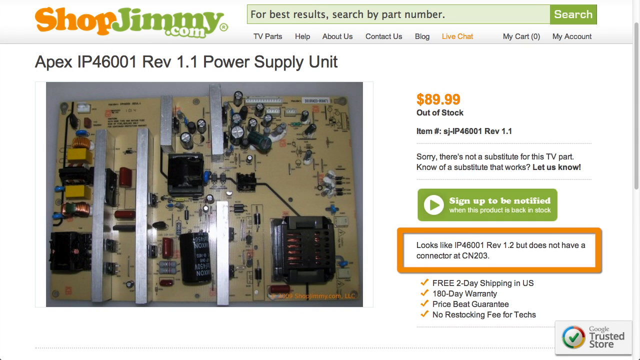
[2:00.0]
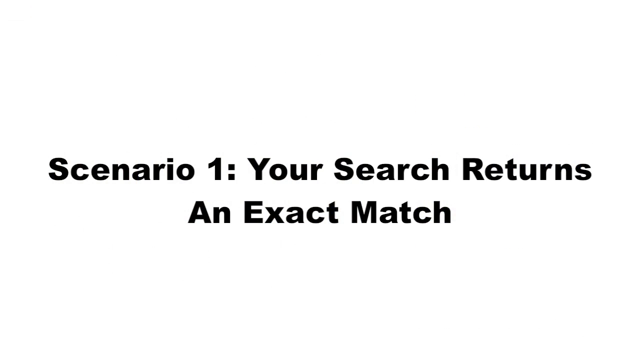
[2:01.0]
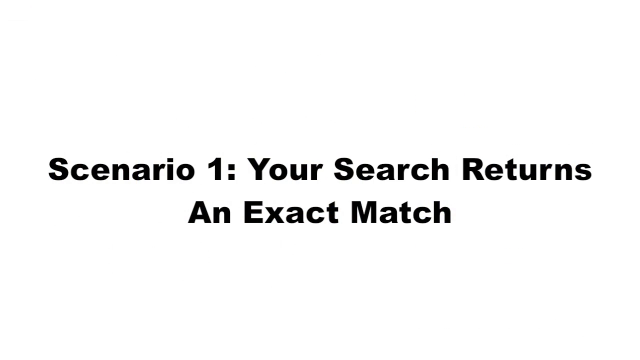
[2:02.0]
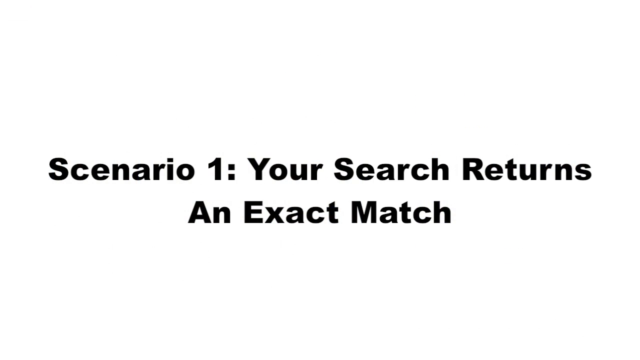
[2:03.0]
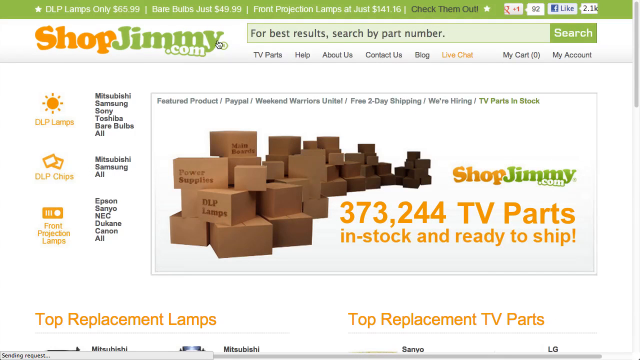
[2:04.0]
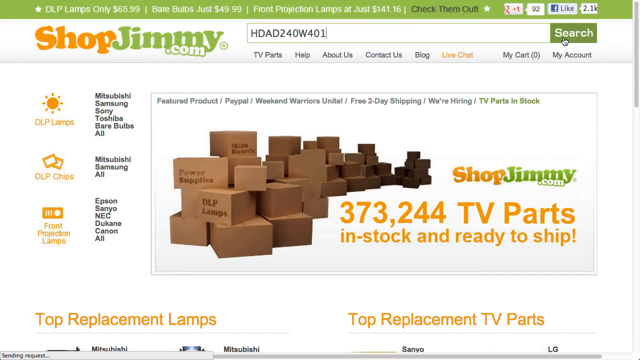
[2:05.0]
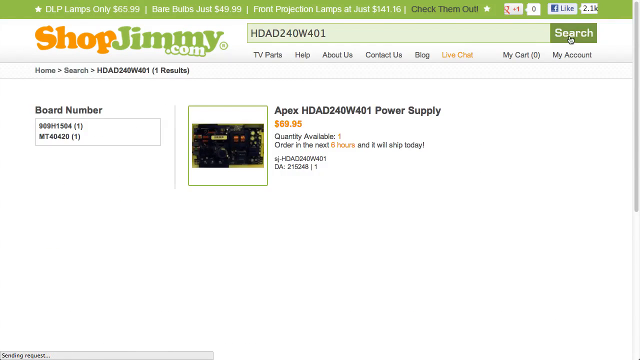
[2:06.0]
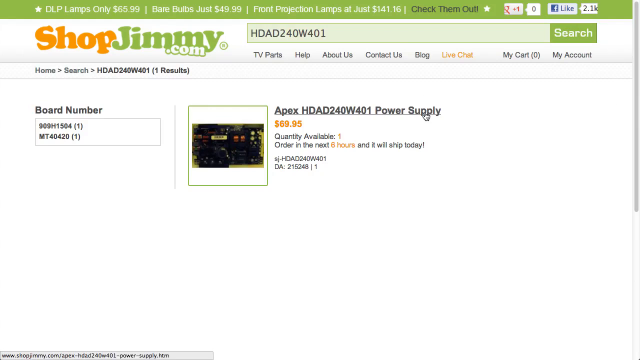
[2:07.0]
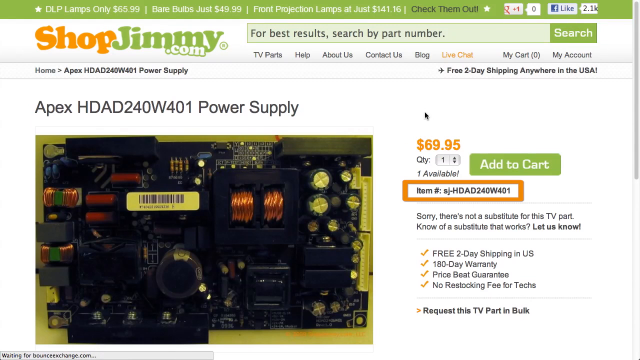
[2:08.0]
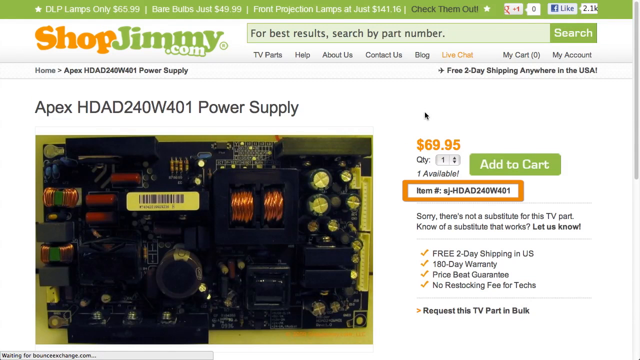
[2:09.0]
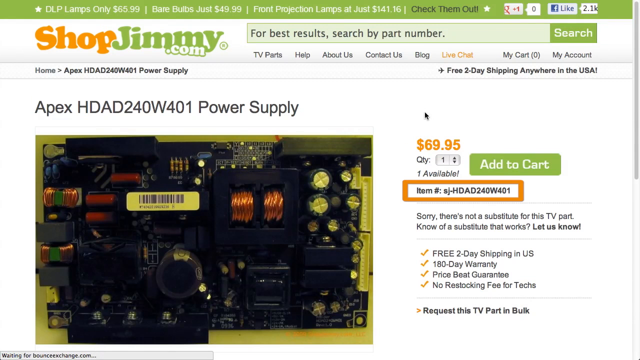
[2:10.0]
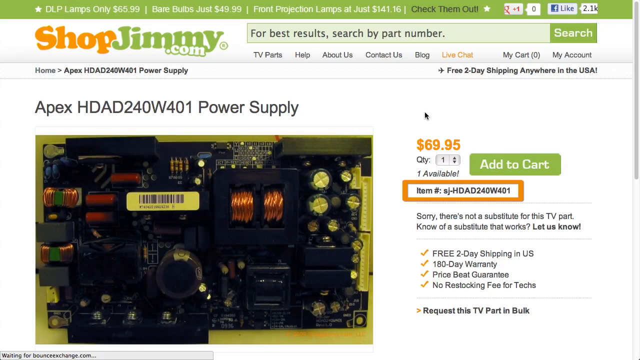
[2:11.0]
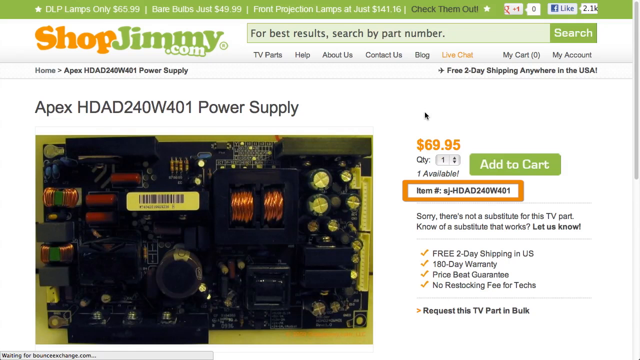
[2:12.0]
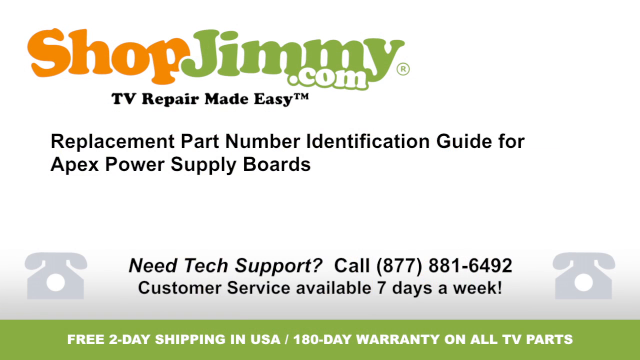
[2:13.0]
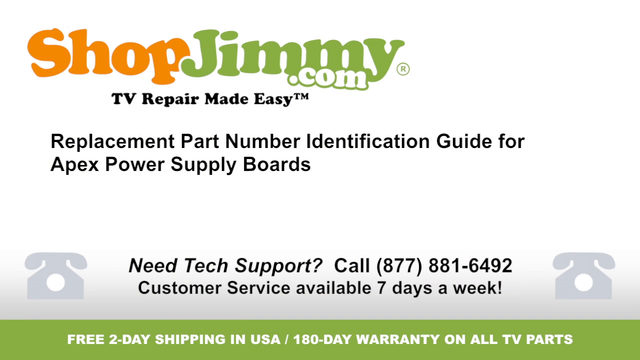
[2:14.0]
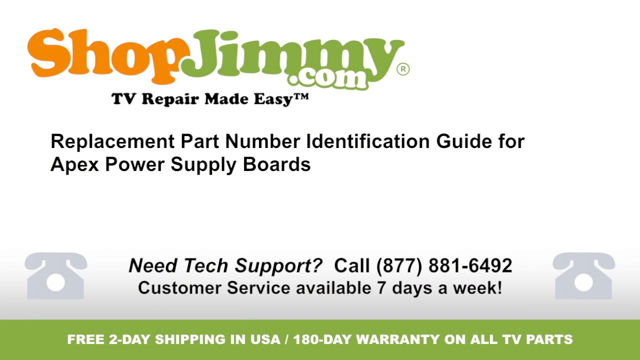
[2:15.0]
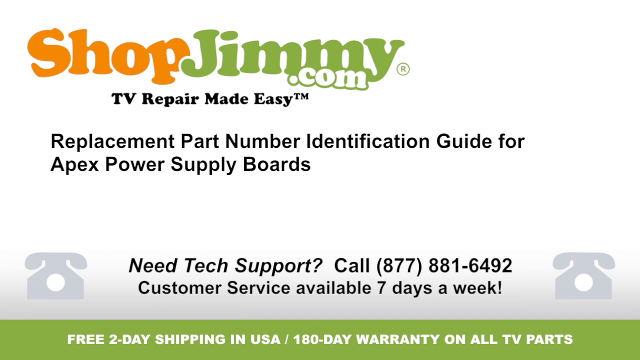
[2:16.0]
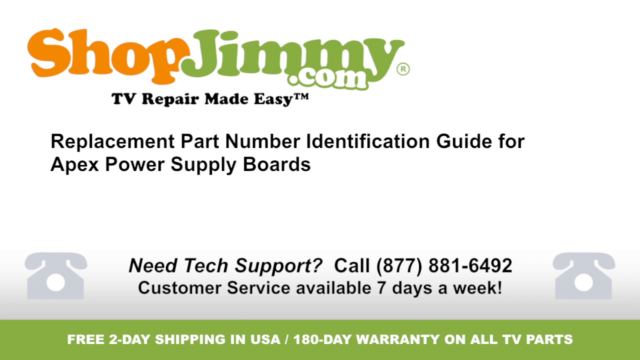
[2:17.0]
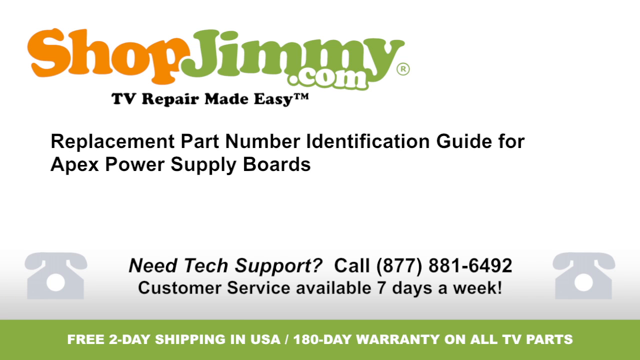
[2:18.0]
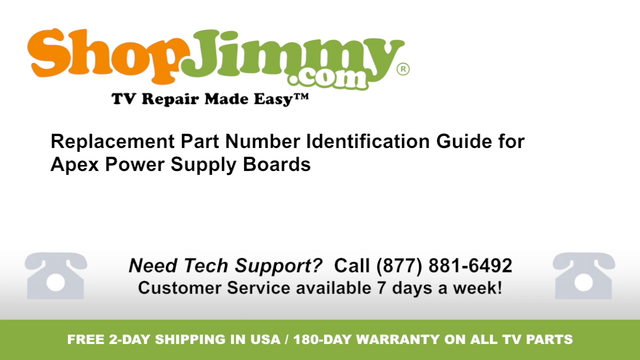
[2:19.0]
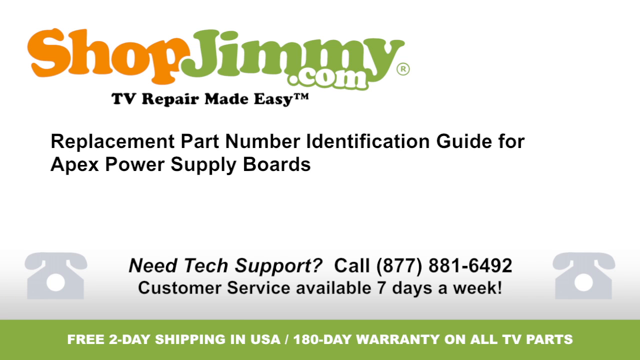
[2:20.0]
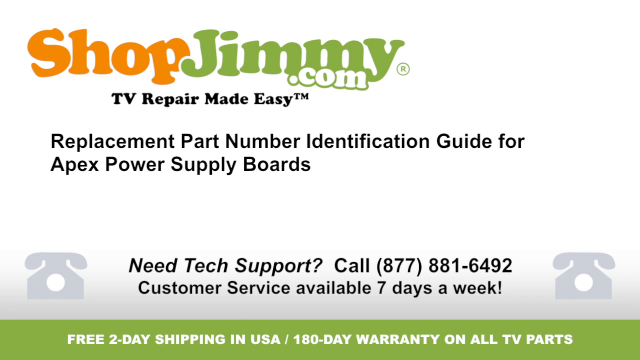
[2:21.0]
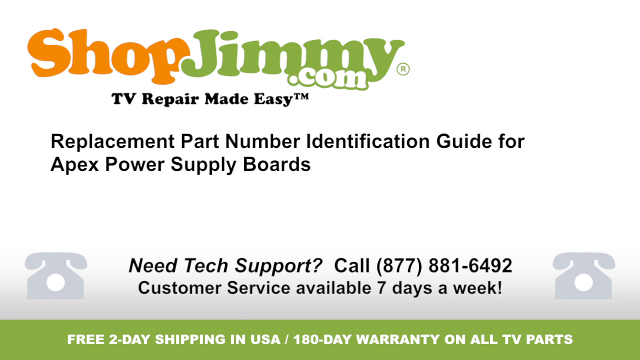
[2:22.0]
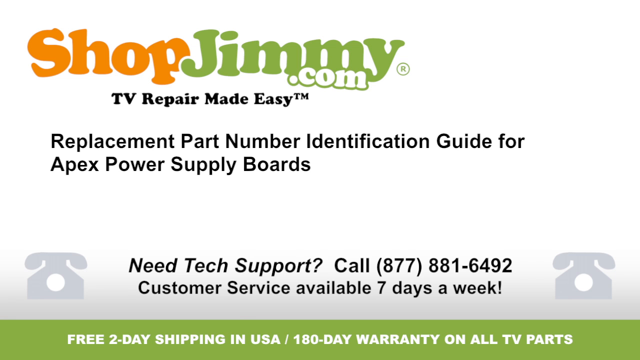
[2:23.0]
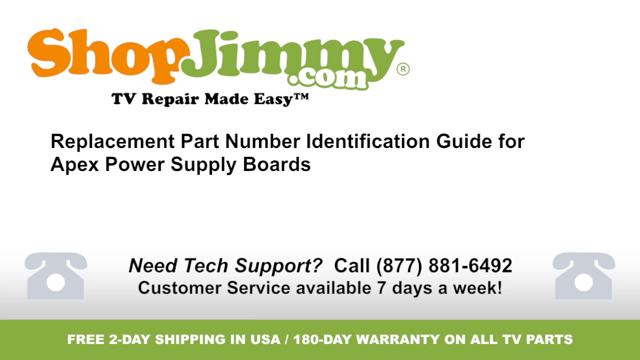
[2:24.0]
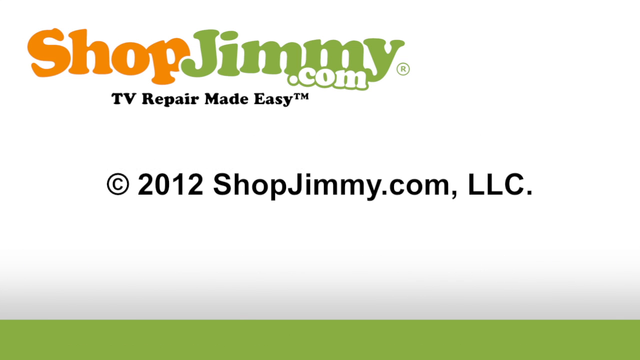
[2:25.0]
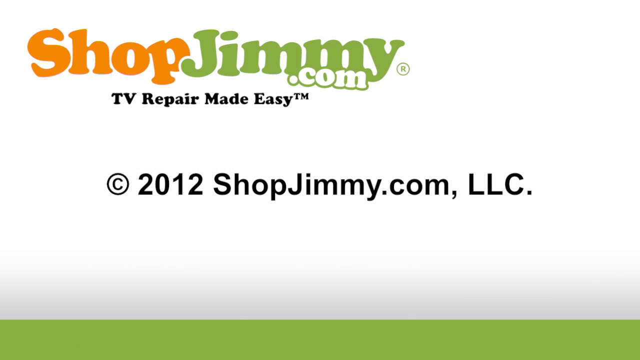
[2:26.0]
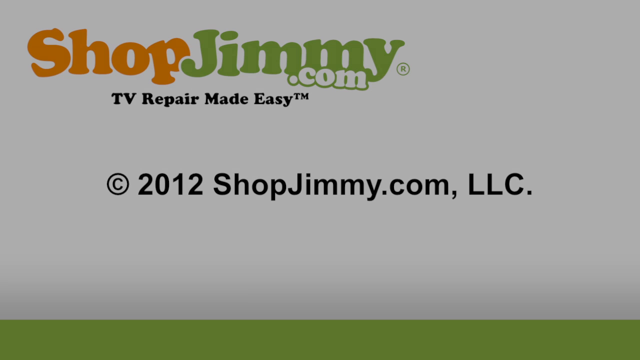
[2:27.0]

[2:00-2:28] A store listing from shopjimmy.com for the Apex IP46001 revision 1.1 power supply unit is shown. The left half of the page has a photo of the power supply unit on a gray workspace, and the right half shows the listing information. It is listed at $89.99 but is out of stock, with item number SJ-IP46001 revision 1.1. The information states there is no substitute for this TV part and asks to be told of a substitute that functions. Beneath that is a green button reading "sign up to be notified when this product is back in stock". Highlighted in an orange-bordered rectangle is text reading "looks like IP46001 revision 1.2 but does not have a connector at CN203". Below that, text reads "free 2 day shipping in US, 180 day warranty, price beat guarantee". The screen changes to a white background with black text reading "scenario 1 your search returns an exact match". A listing webpage follows, where the person recording their screen types a model number into the search bar at the very top and clicks search. A part with the exact same model number as the search appears, and the user clicks on the listing and looks at it.